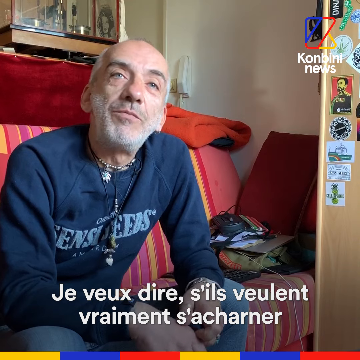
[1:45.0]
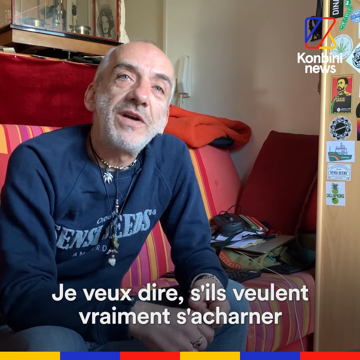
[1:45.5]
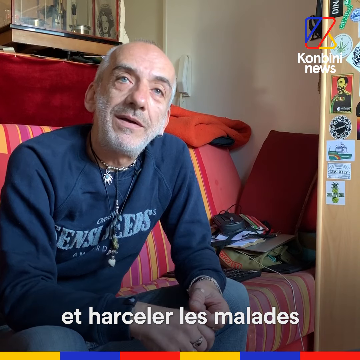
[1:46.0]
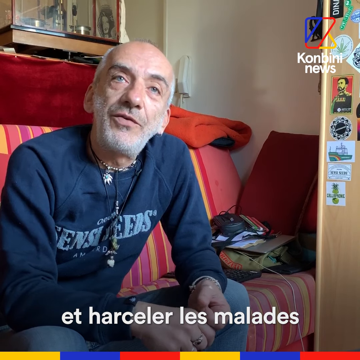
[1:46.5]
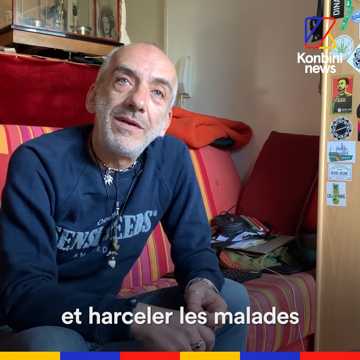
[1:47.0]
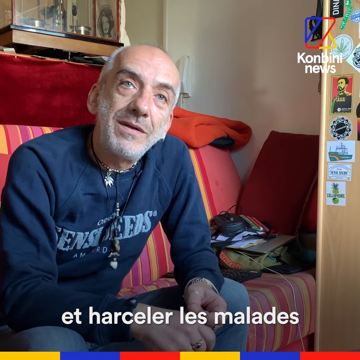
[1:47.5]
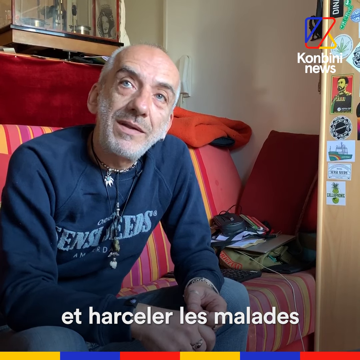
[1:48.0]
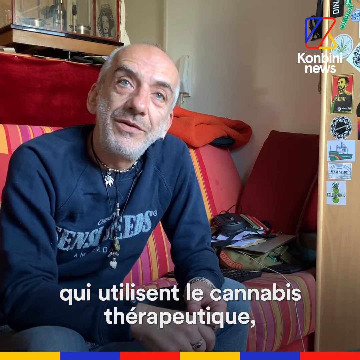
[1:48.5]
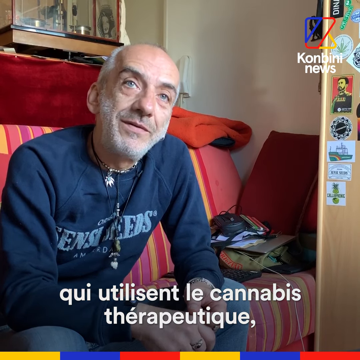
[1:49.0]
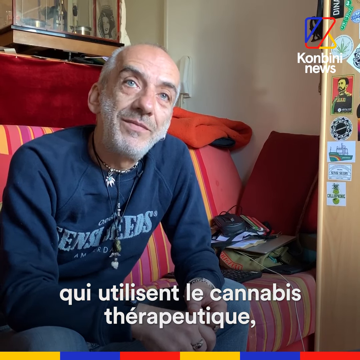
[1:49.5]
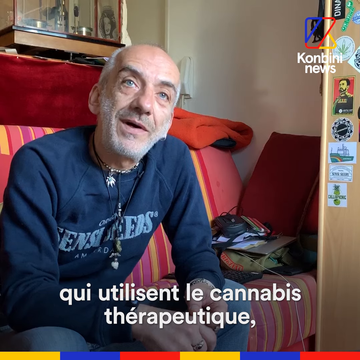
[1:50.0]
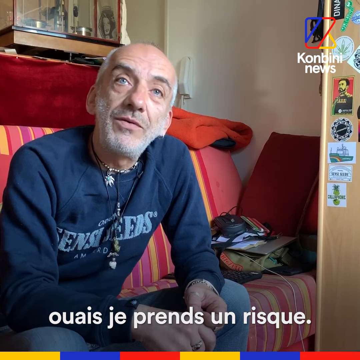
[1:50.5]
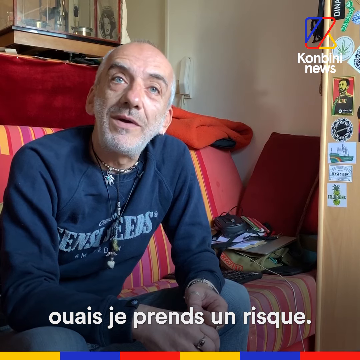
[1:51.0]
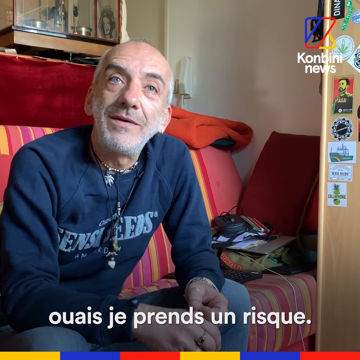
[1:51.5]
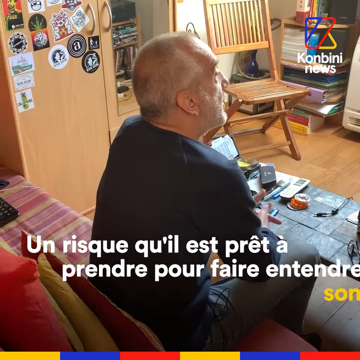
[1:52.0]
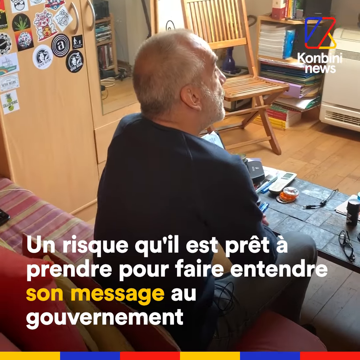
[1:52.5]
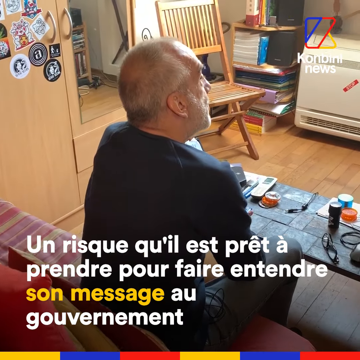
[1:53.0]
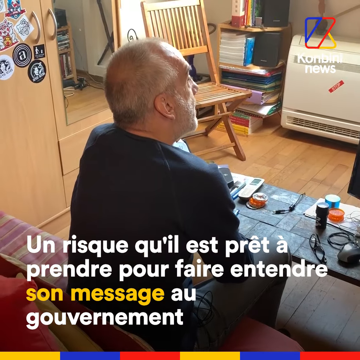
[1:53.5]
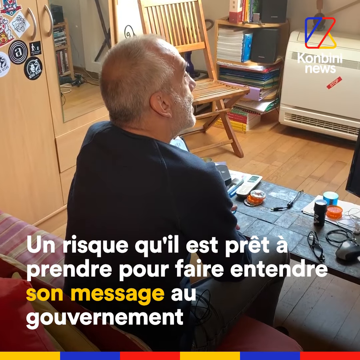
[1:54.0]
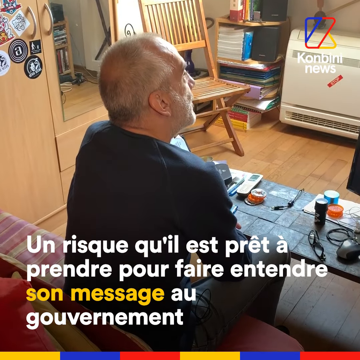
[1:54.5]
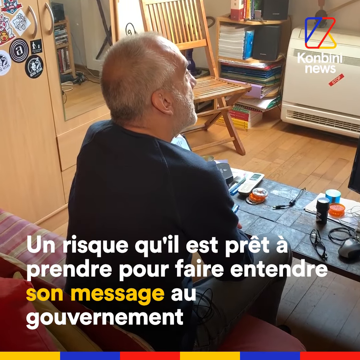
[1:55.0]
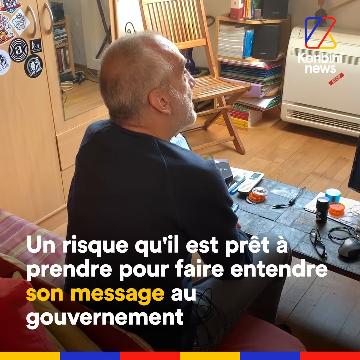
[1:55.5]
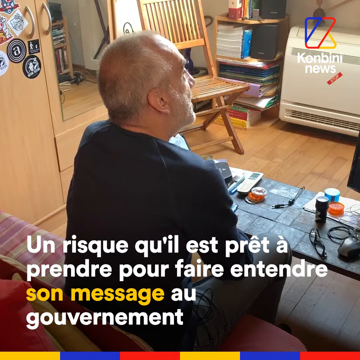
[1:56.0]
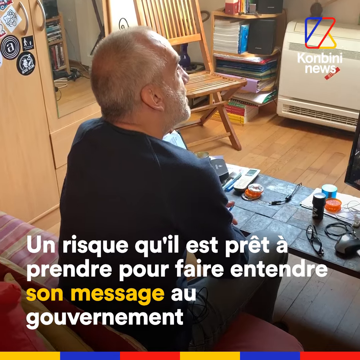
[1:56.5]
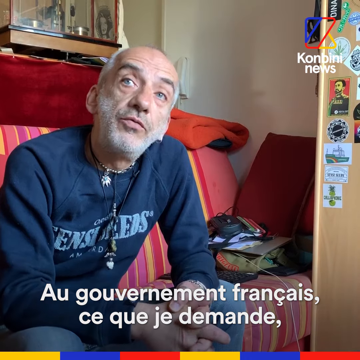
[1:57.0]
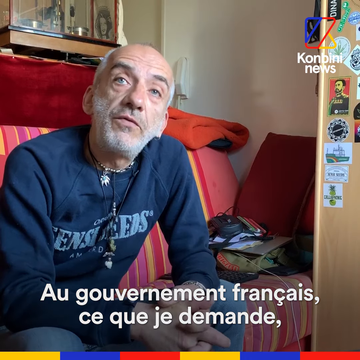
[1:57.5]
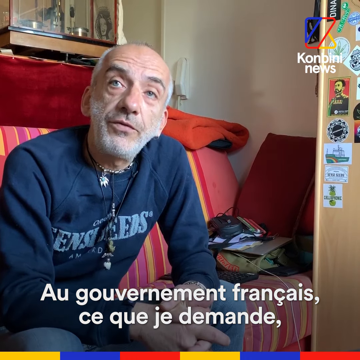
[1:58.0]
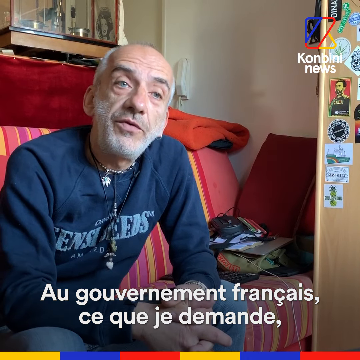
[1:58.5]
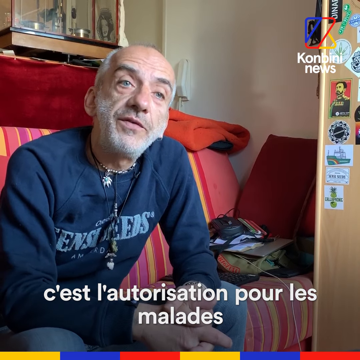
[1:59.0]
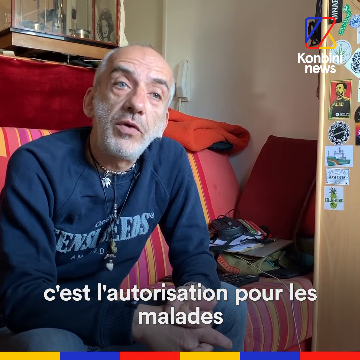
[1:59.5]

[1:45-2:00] He is back on the sofa, talking. The Konbini logo is in the bottom right. The camera angle changes to behind him, revealing a folding wooden chair in the room and the window in front of him. He talks with his hands in his lap, kind of folded, and seems very relaxed and a little amused, as if the conversation is very casual and pleasant. Across from him is something like a heater or an air conditioner in a kind of off-white color, with a chair to the right of it, but not much more of the room is visible. Some items and some papers are stacked on the floor. The room is generally neat even though there is a lot of stuff in it. There are some stickers on a cabinet next to him by the sofa, and the cabinet door has a mirror. Some unidentifiable items are on the sofa next to him.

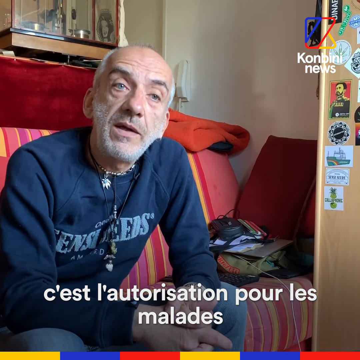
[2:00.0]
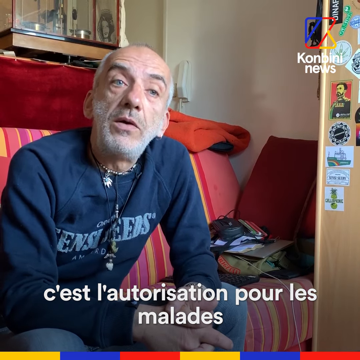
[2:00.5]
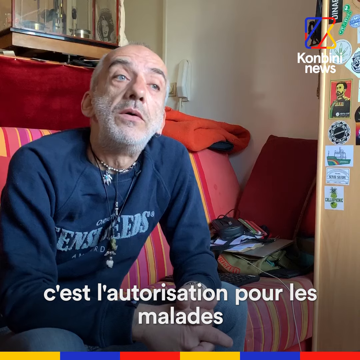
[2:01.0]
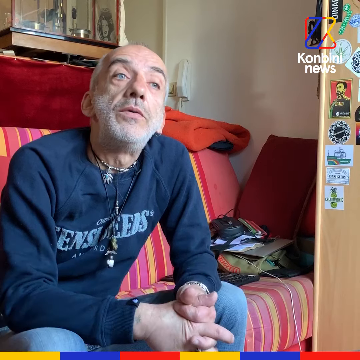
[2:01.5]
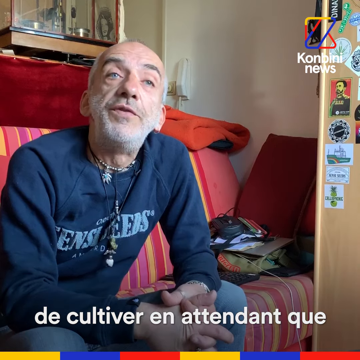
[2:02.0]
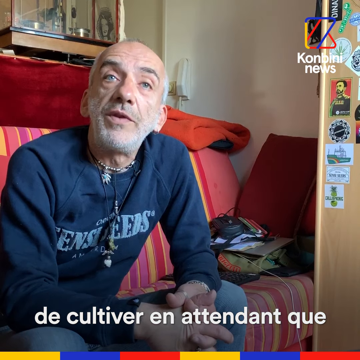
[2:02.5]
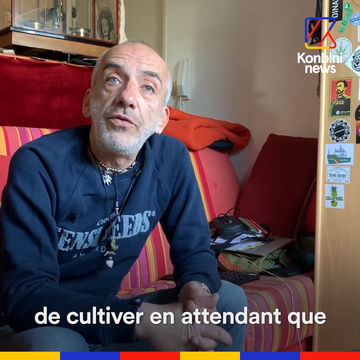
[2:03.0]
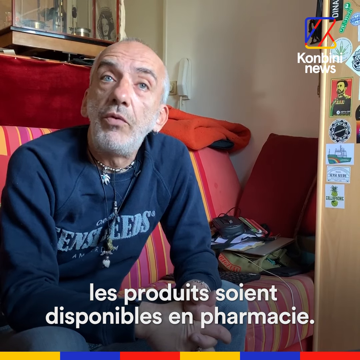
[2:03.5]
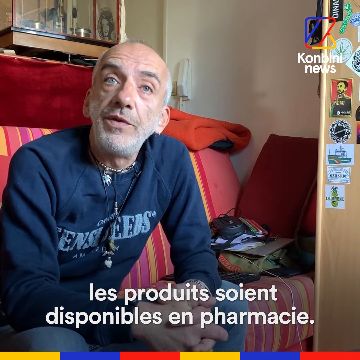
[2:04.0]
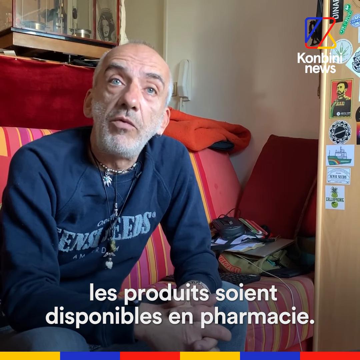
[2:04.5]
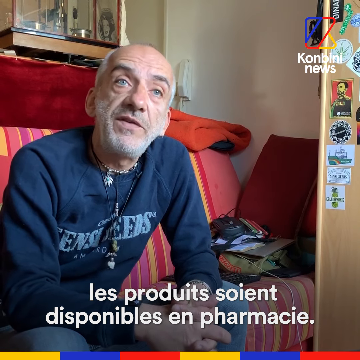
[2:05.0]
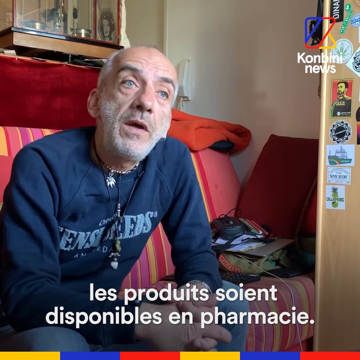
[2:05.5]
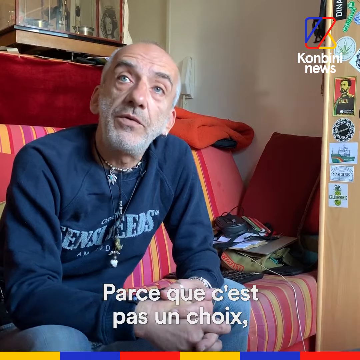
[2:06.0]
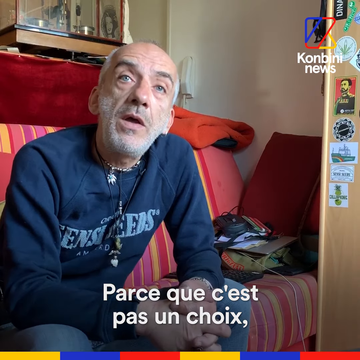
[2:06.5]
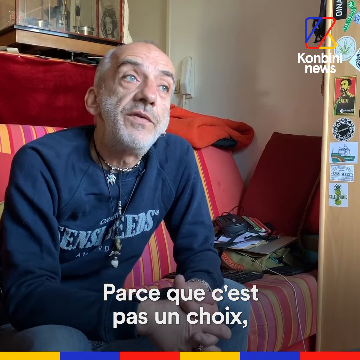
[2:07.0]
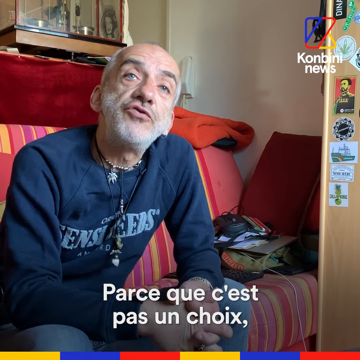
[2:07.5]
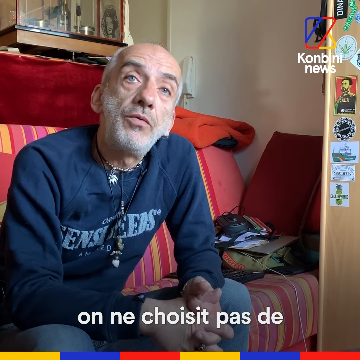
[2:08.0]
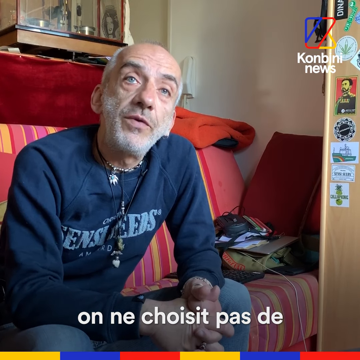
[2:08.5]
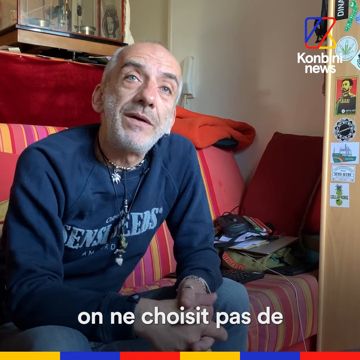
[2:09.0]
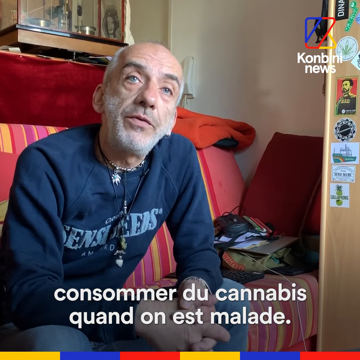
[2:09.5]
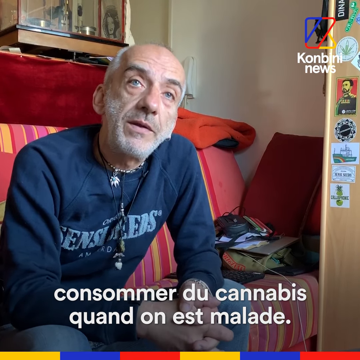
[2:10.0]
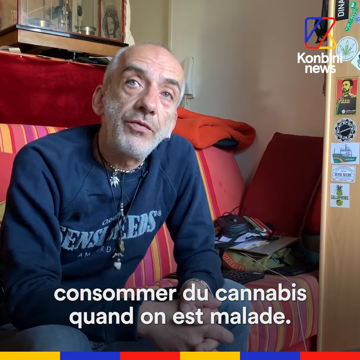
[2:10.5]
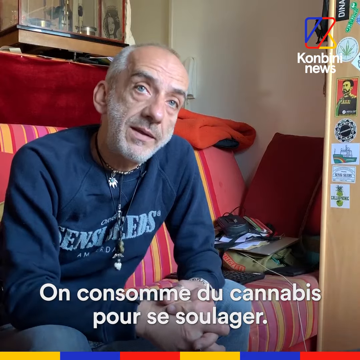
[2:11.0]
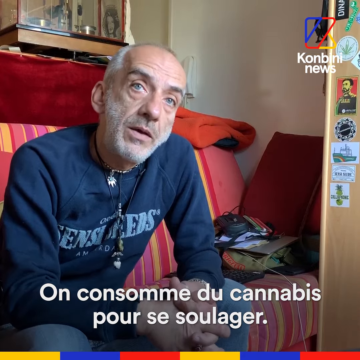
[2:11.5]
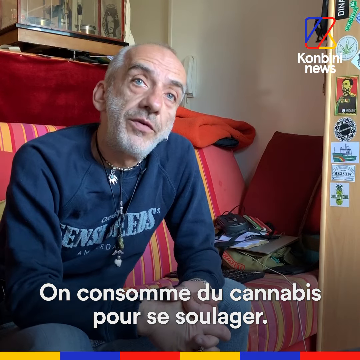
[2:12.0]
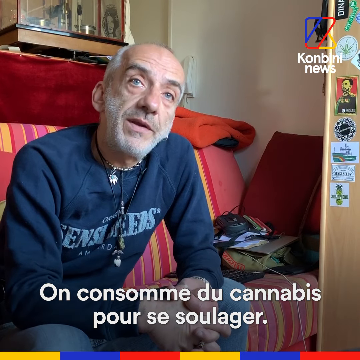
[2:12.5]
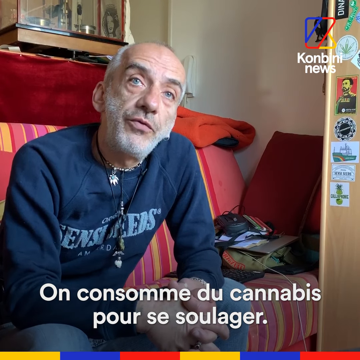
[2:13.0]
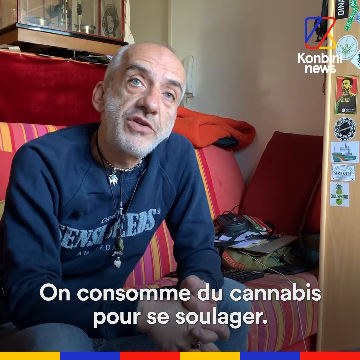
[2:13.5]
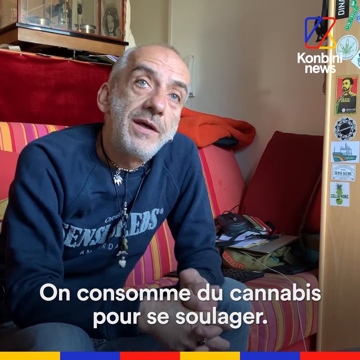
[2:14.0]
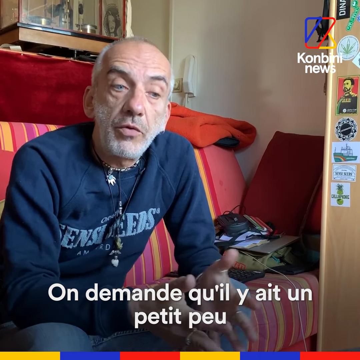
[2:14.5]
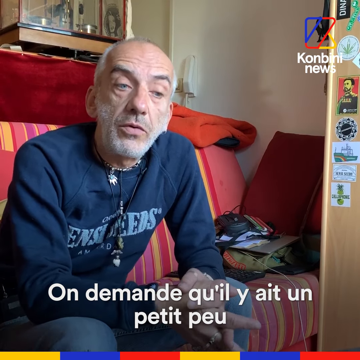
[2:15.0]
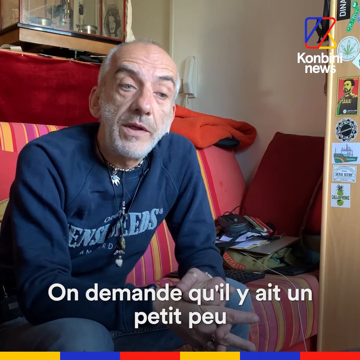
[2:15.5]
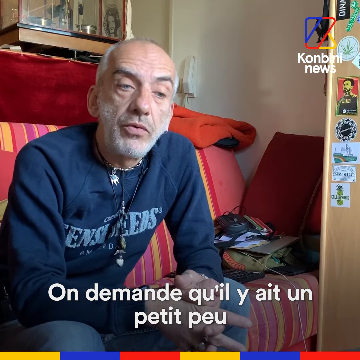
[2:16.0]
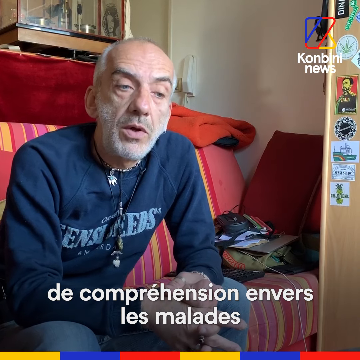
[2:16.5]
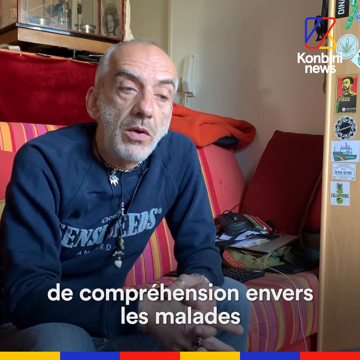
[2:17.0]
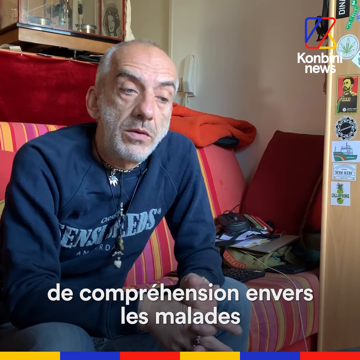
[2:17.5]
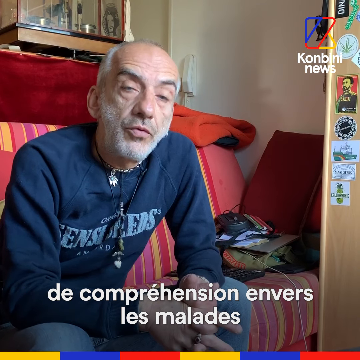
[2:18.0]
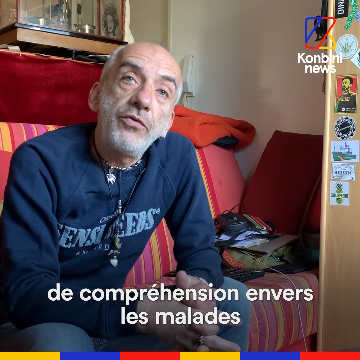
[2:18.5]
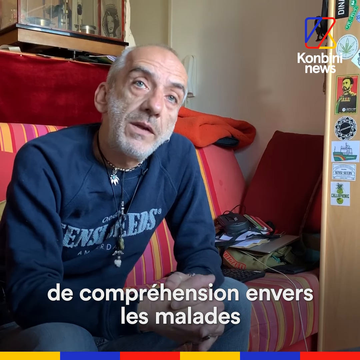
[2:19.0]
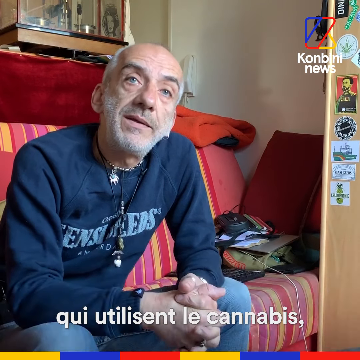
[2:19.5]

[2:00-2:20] He is on the sofa talking. Light comes in from a window on the right-hand side, facing him and casting him in natural light. He seems very relaxed and conversational, as if it is a very pleasant conversation. He wears the same navy blue t-shirt with white text and jeans, three necklaces, and several rings on his fingers. His ears are pierced, his hair is close cropped and gray, his eyebrows are slightly darker, his beard is light and gray, and he has very bright blue eyes. The subtitles underneath appear to be in French. The sofa has red, pink and yellow stripes running vertically from the top down to the bottom of the seating. The camera angle never changes.